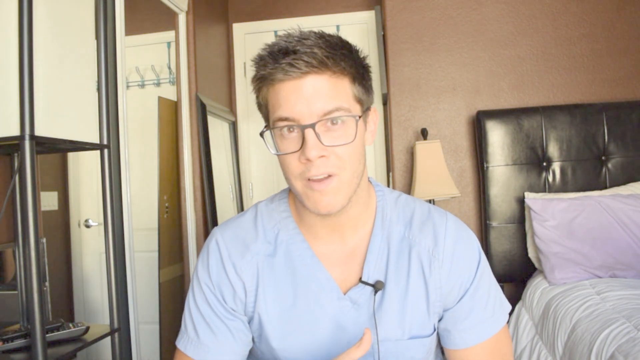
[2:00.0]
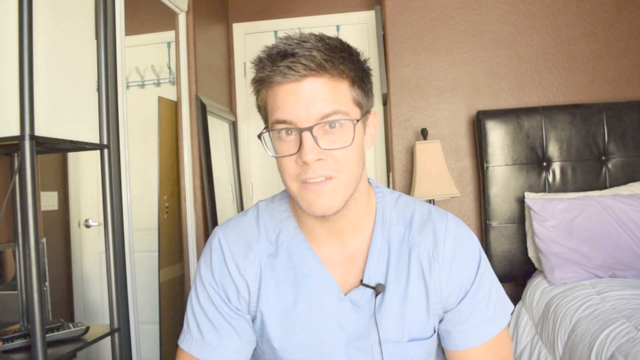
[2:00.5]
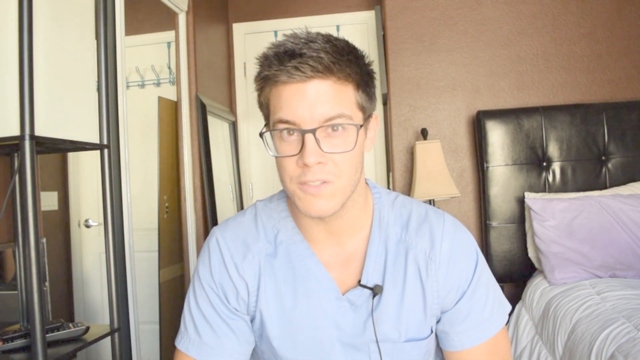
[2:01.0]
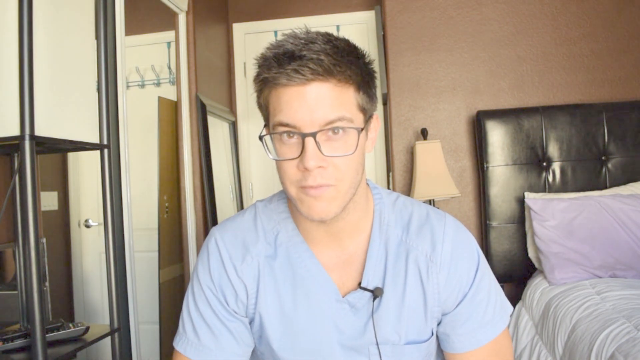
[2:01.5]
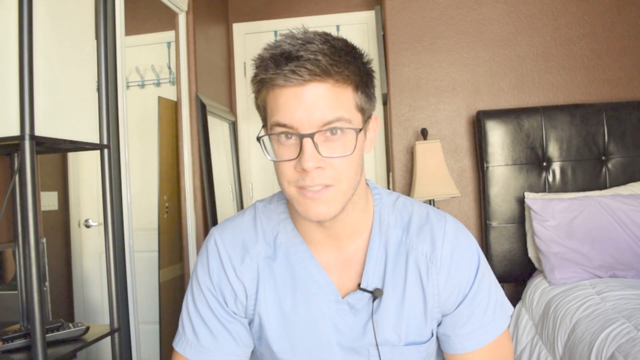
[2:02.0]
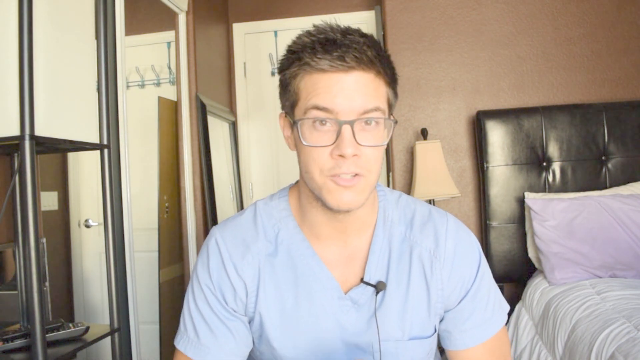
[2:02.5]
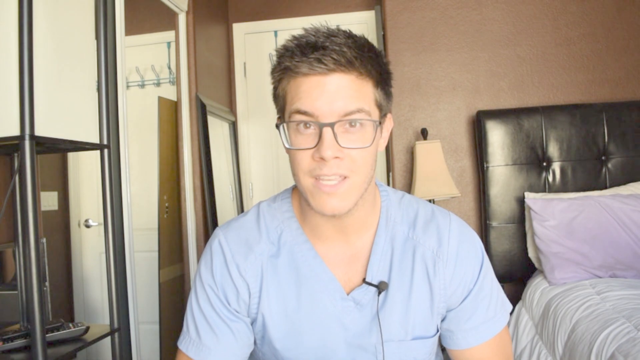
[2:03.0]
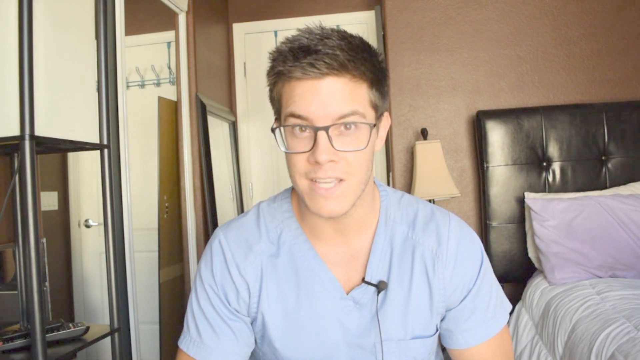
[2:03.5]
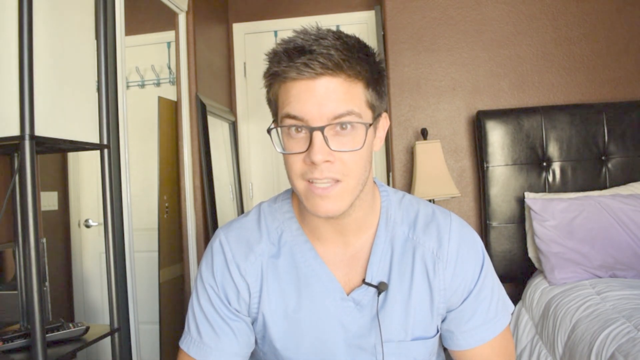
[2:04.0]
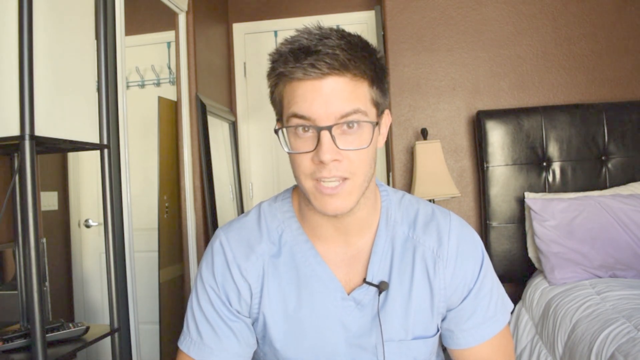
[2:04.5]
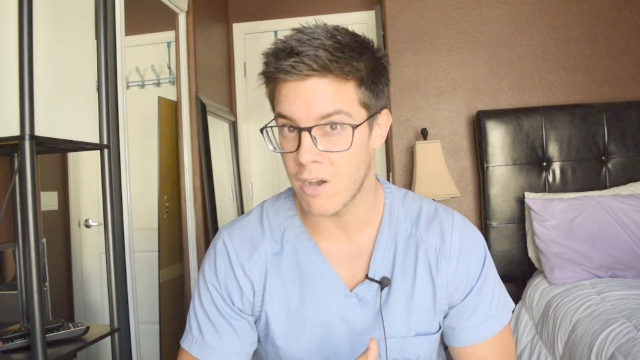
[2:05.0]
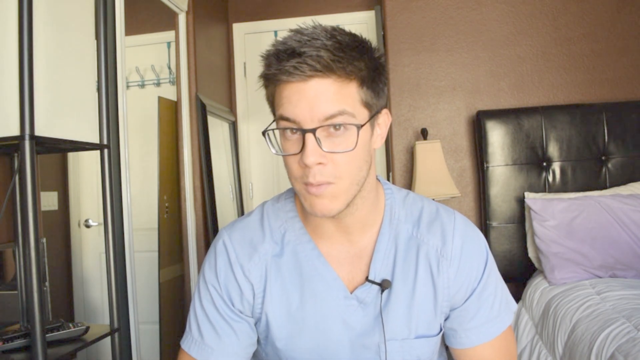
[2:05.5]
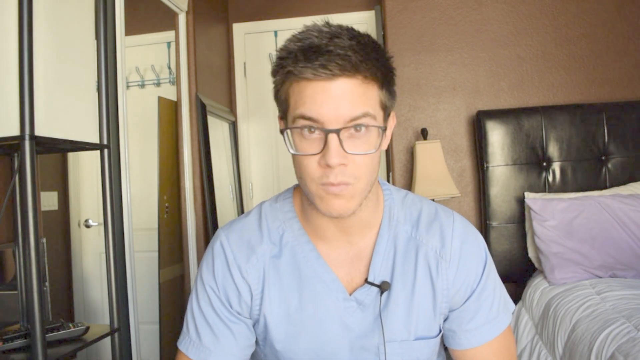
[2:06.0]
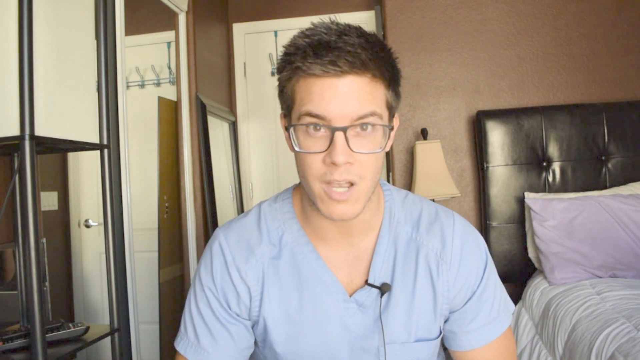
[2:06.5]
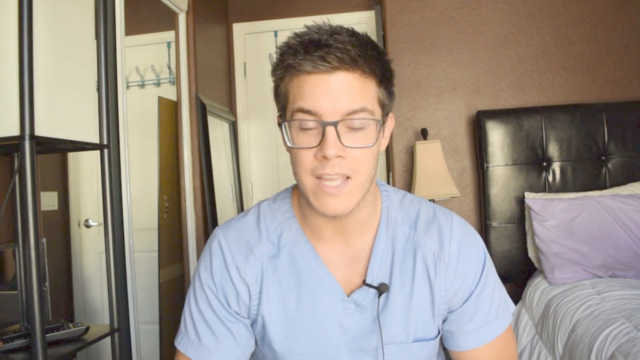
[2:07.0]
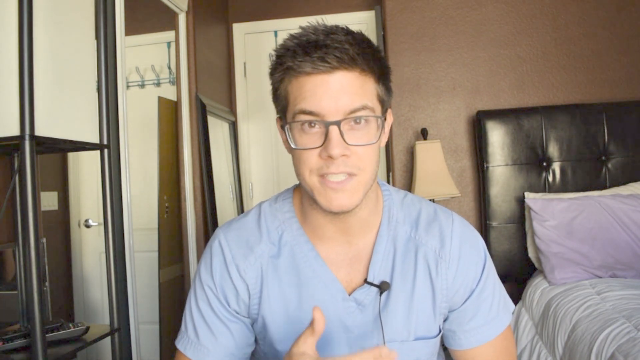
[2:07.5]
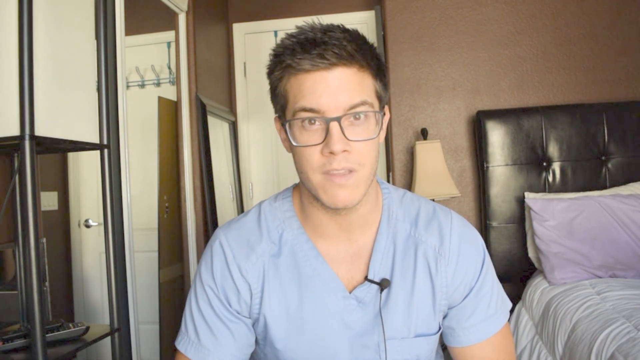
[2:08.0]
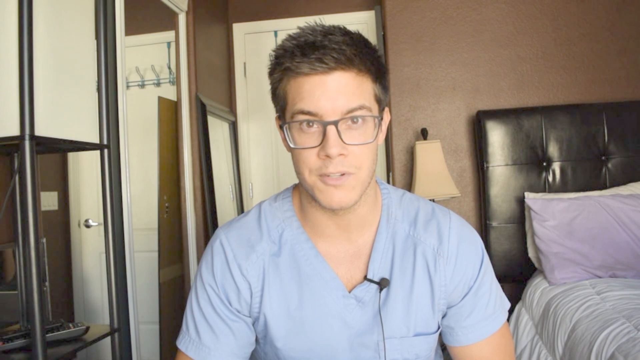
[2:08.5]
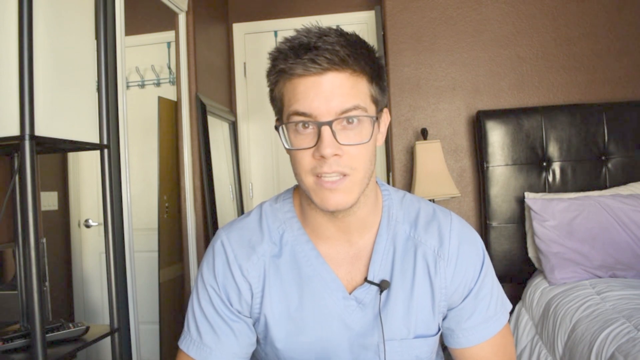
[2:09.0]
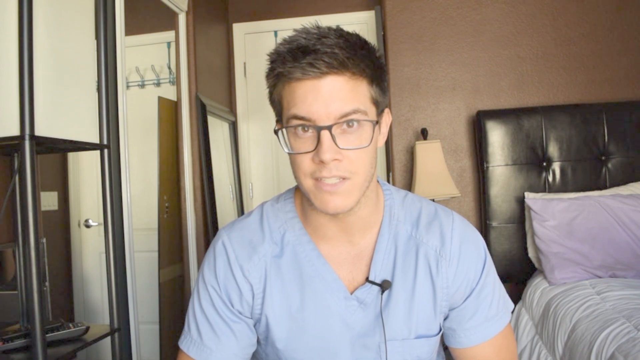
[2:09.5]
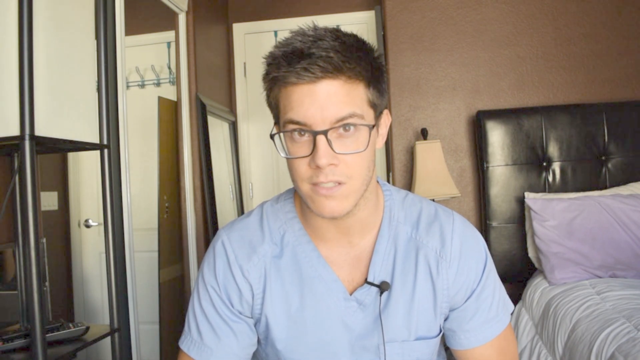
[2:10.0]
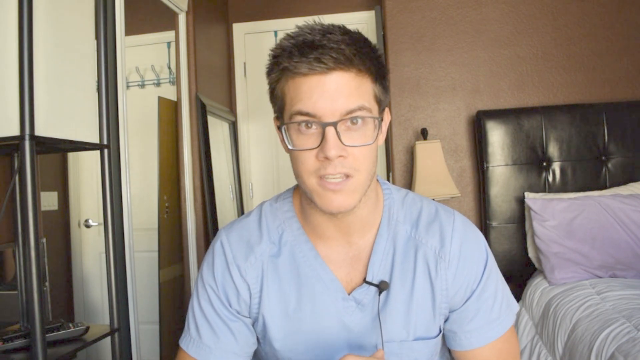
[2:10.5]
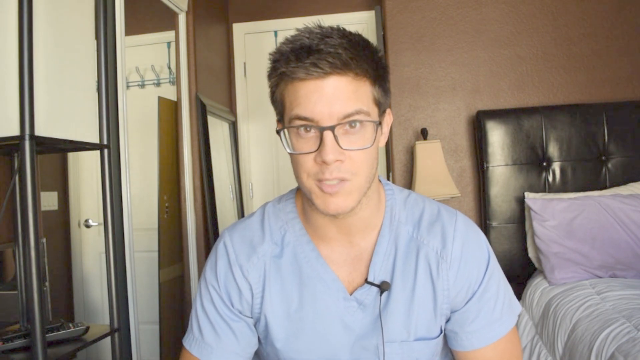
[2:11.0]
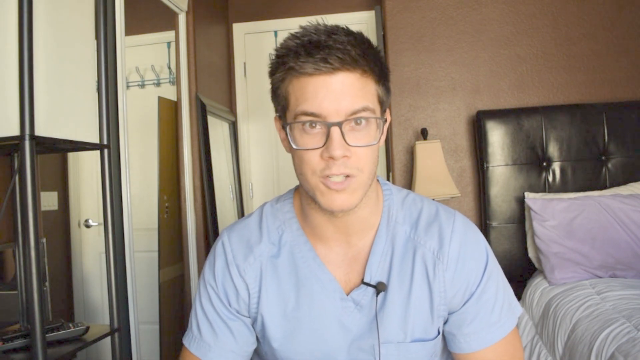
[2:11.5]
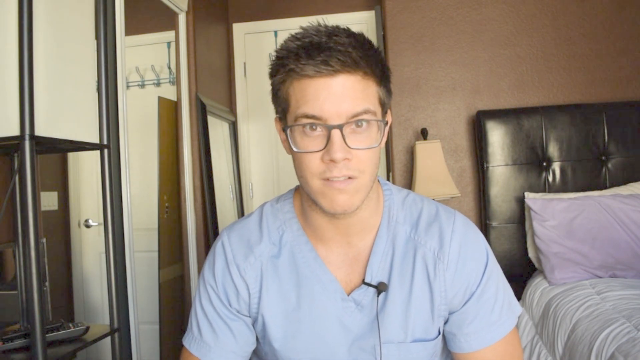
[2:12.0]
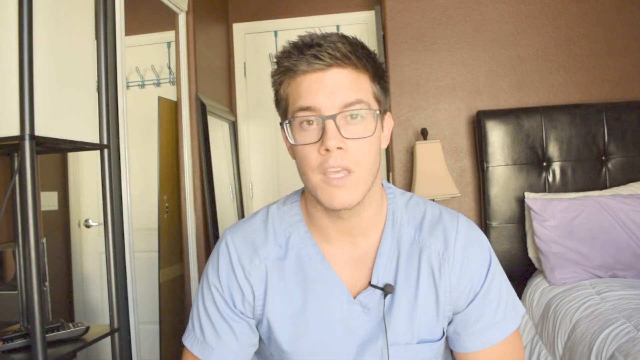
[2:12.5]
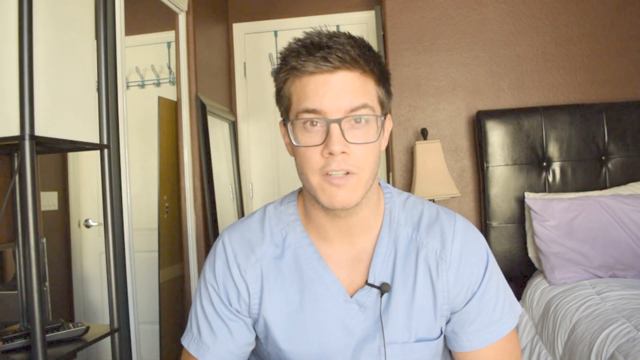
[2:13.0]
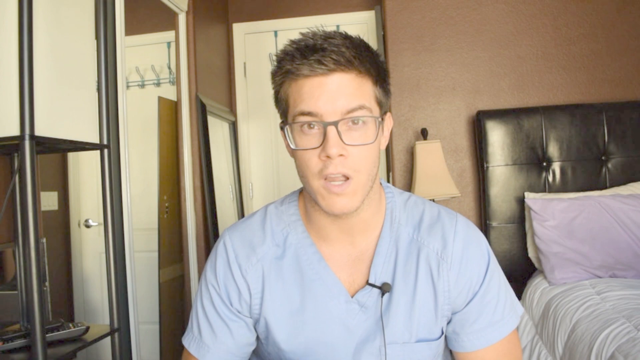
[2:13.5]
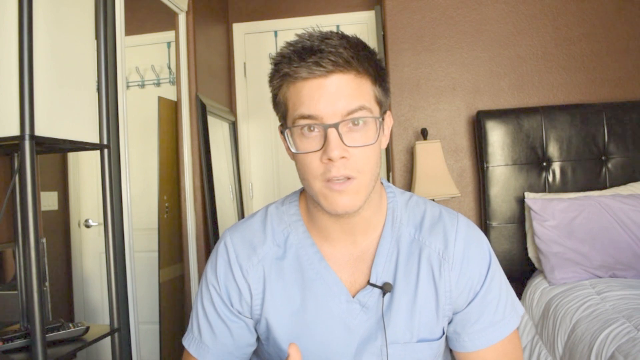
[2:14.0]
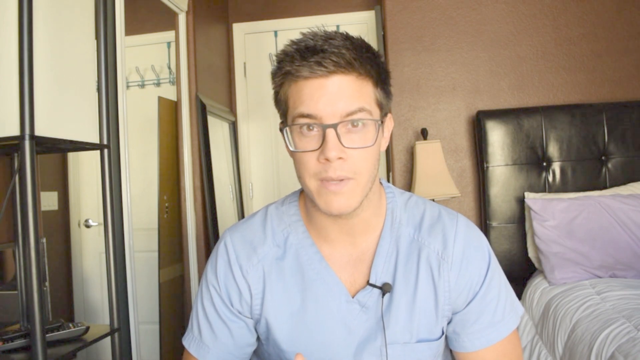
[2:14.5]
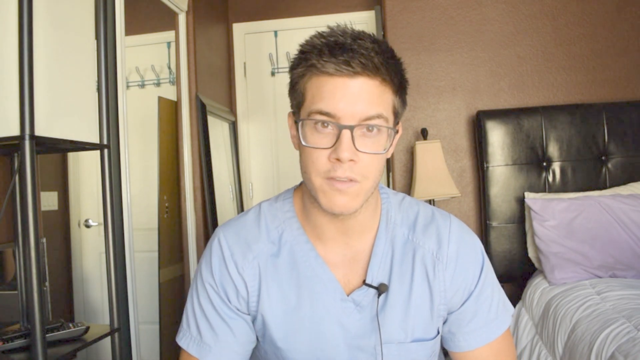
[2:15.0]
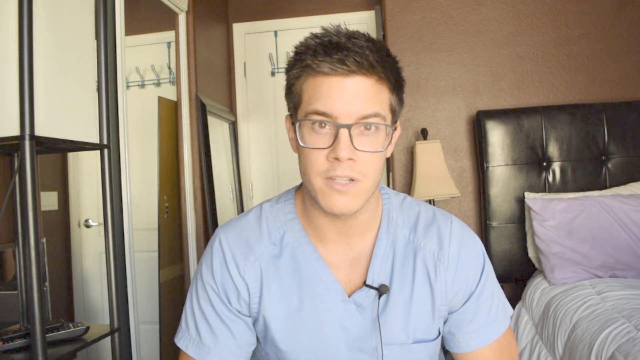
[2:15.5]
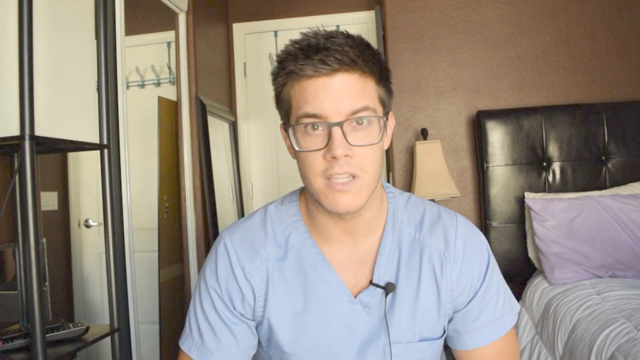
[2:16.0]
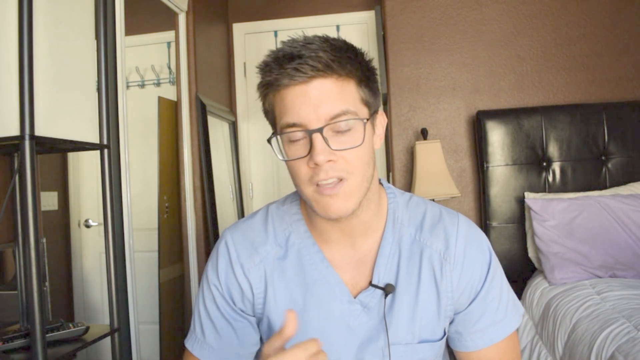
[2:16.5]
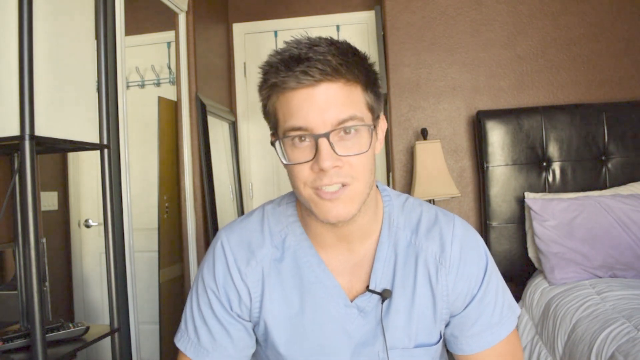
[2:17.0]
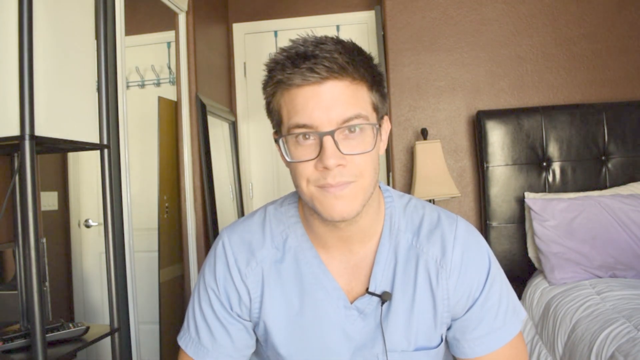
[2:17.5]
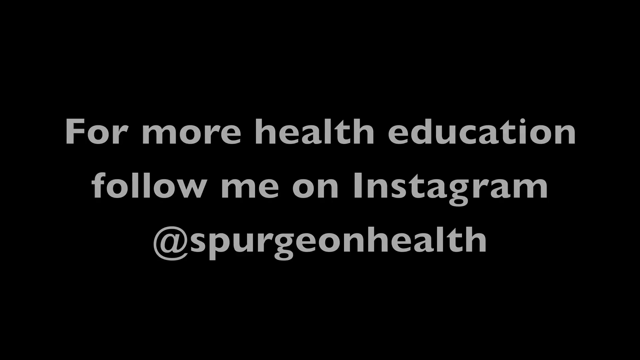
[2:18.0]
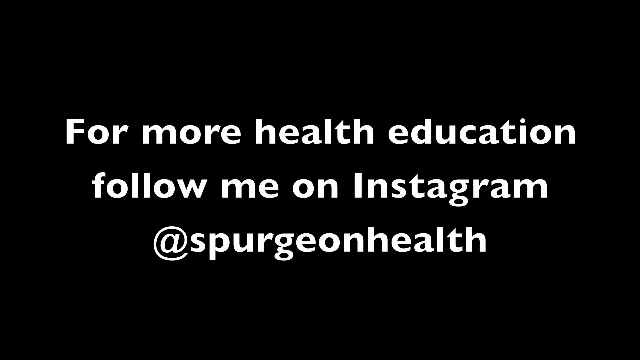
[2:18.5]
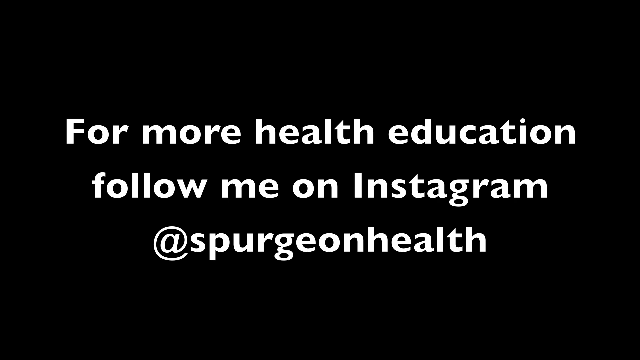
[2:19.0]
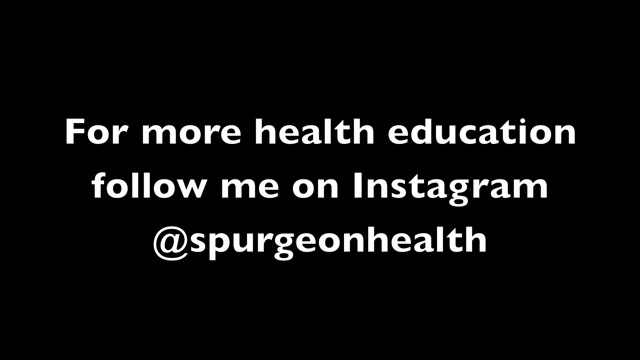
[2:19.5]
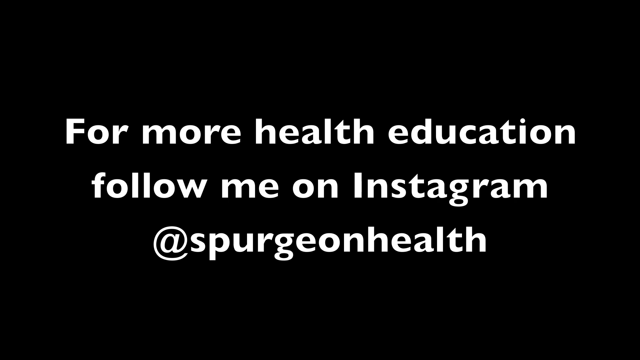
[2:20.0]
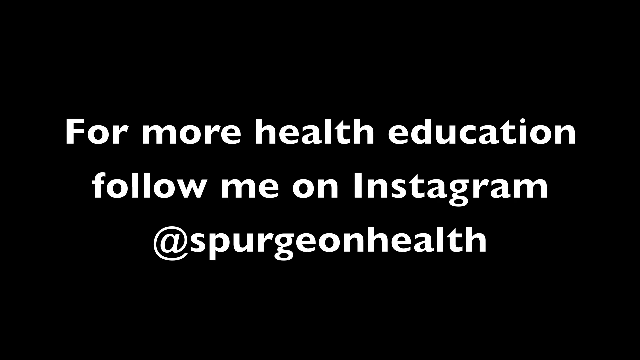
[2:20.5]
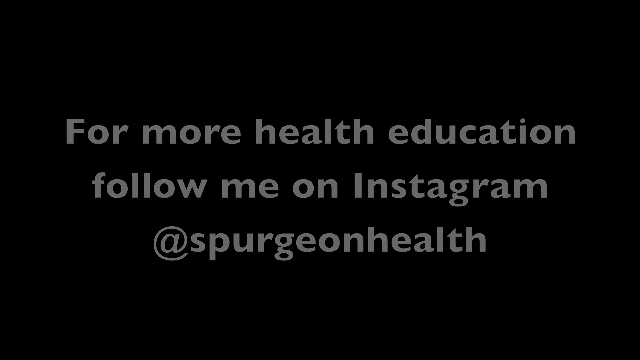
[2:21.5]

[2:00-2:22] The boy continues talking as before. Text reads "For more health education, follow me on Instagram", with the handle Spoon GeoHealth, and there is apparently a number as well. This is a medical or health education video.